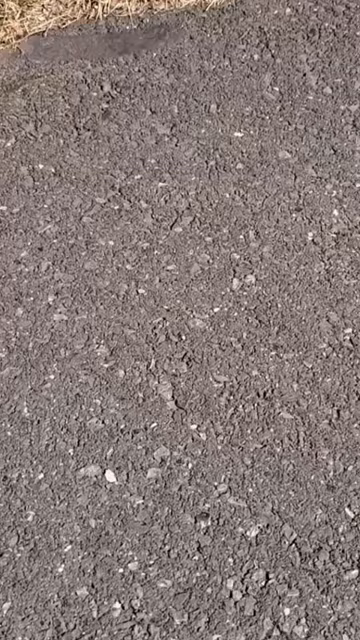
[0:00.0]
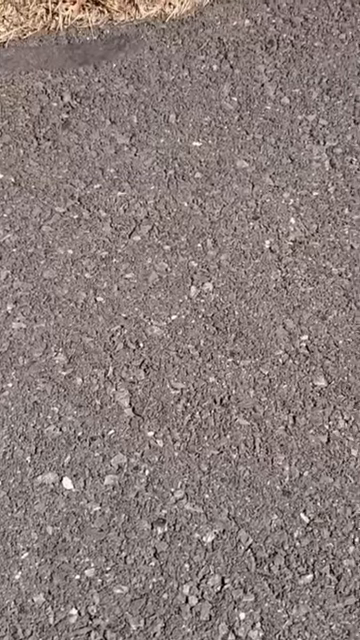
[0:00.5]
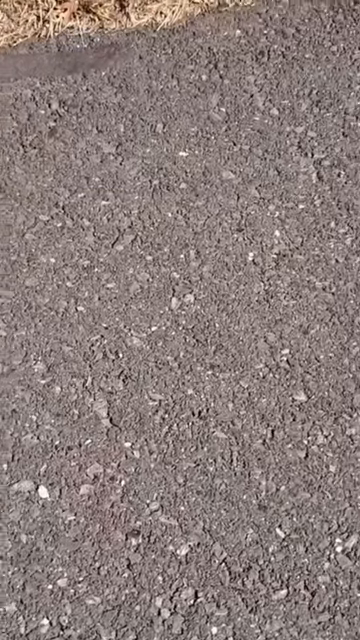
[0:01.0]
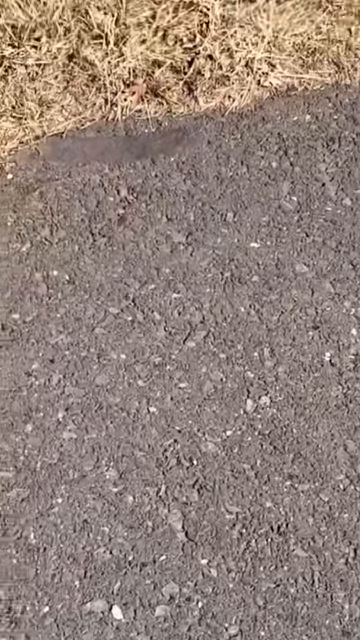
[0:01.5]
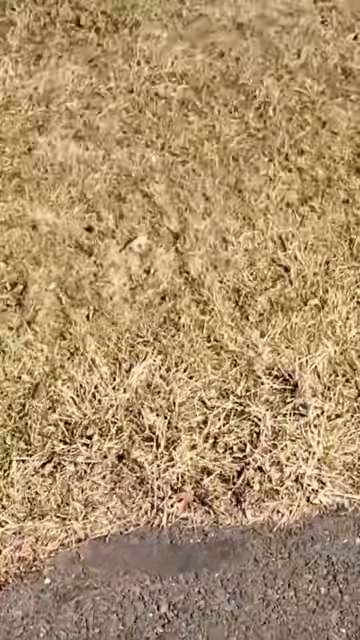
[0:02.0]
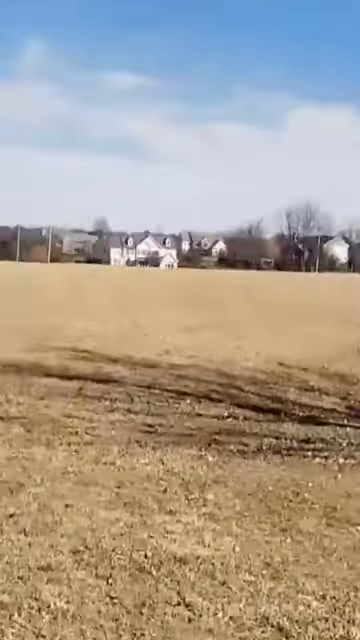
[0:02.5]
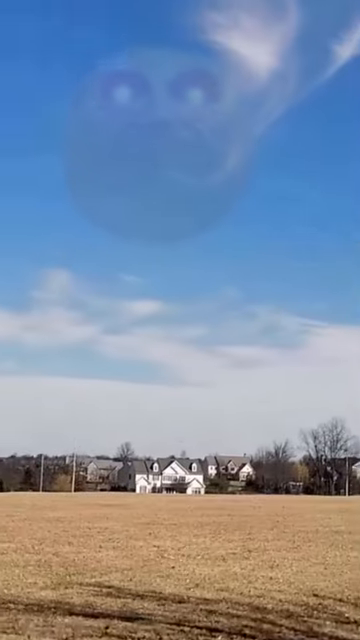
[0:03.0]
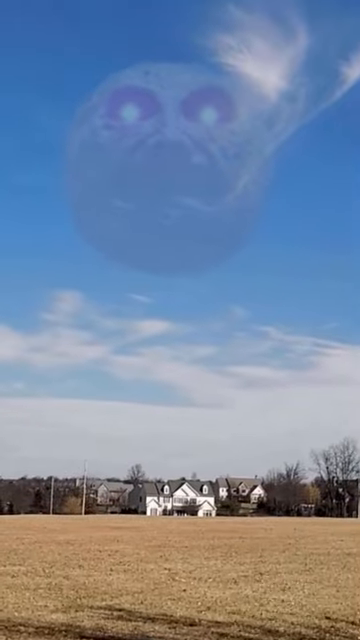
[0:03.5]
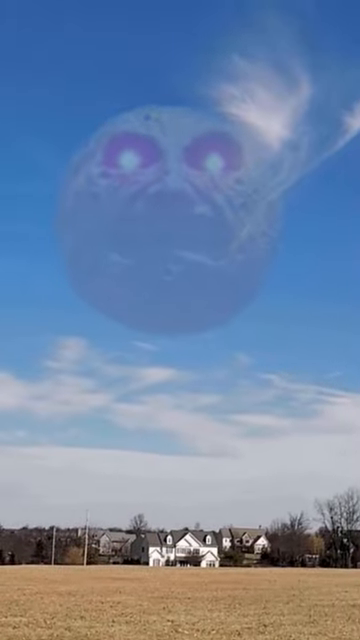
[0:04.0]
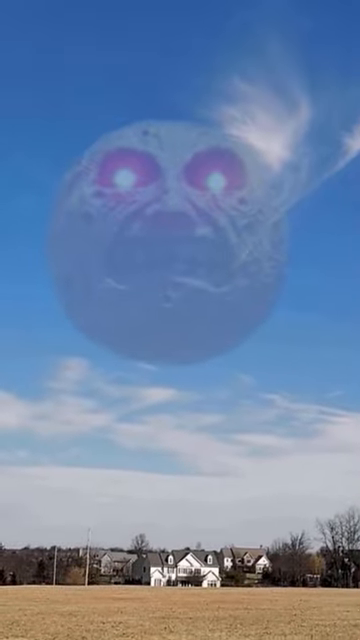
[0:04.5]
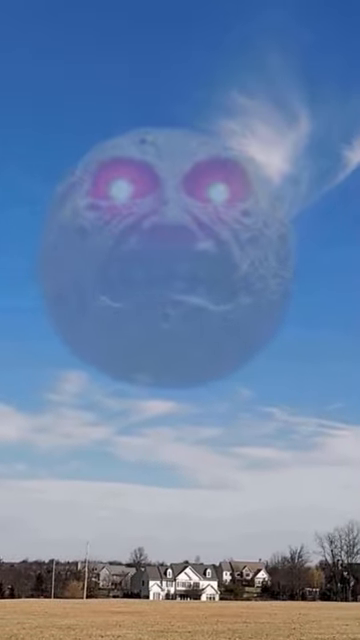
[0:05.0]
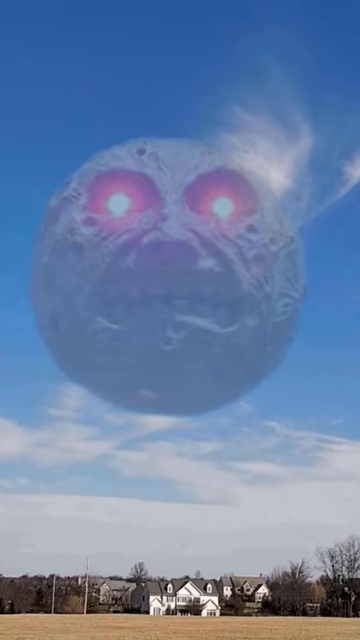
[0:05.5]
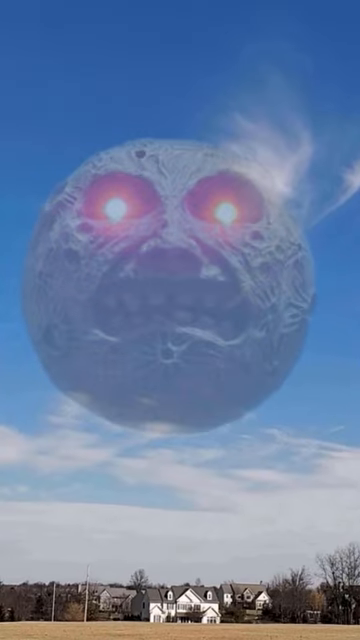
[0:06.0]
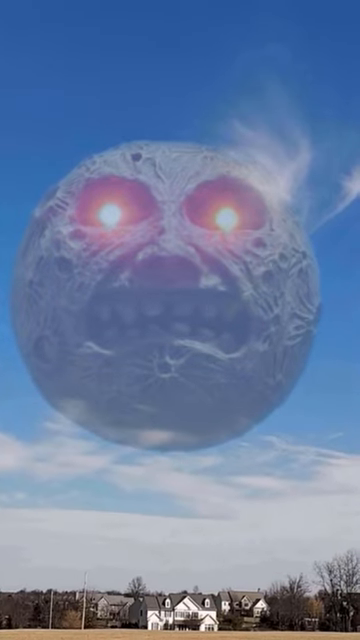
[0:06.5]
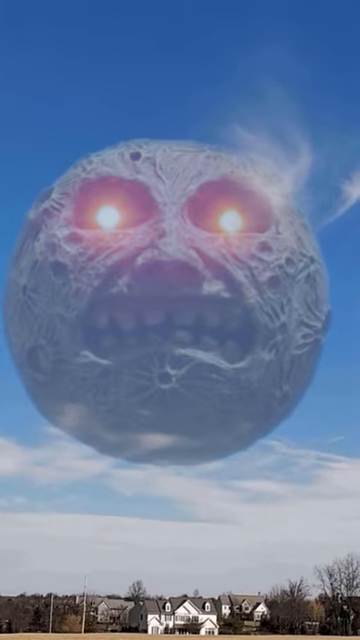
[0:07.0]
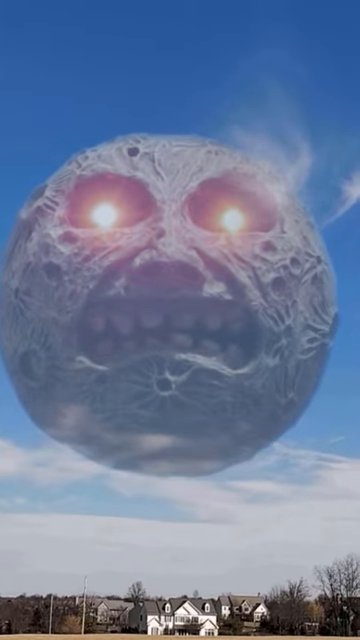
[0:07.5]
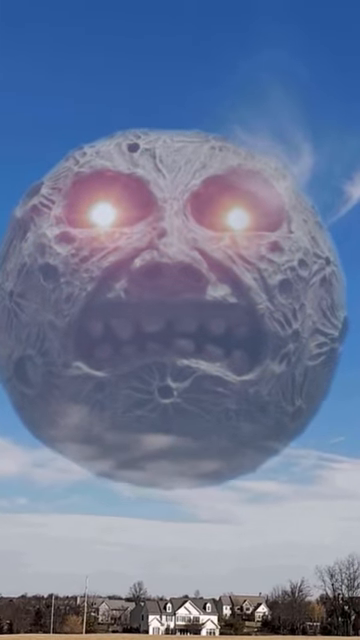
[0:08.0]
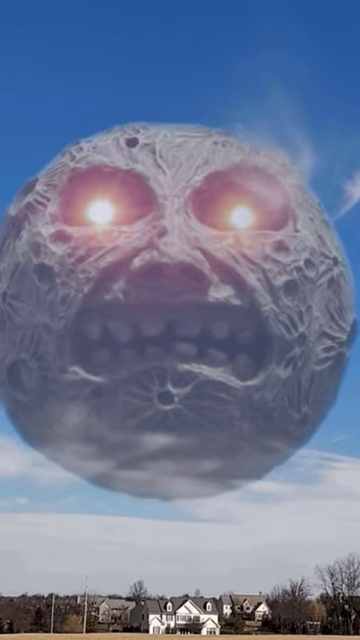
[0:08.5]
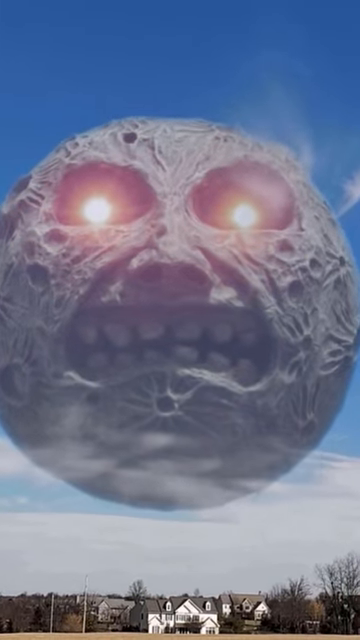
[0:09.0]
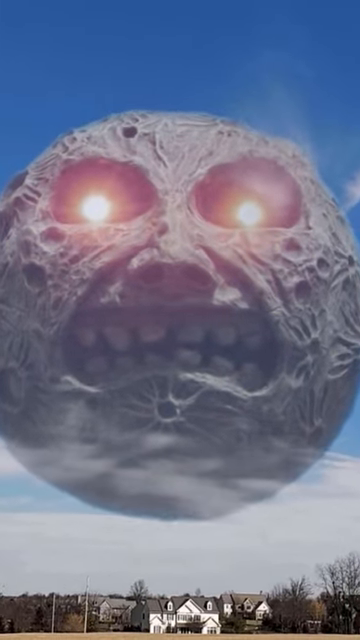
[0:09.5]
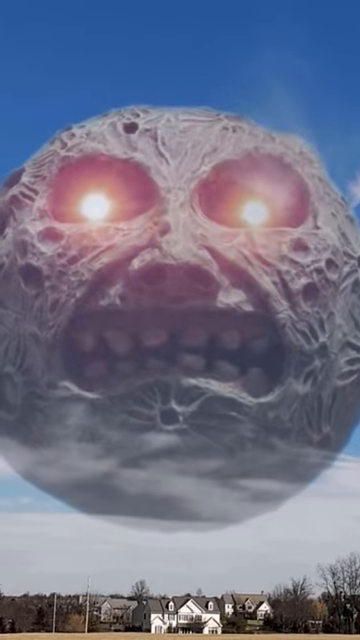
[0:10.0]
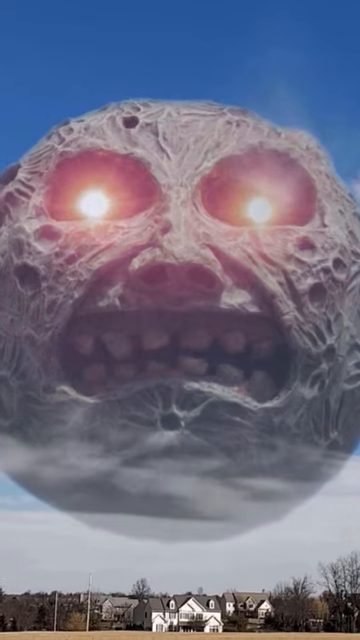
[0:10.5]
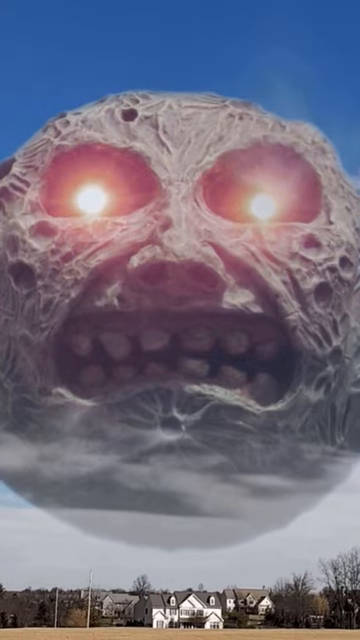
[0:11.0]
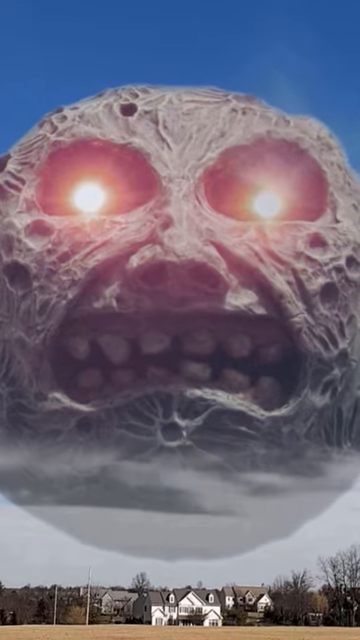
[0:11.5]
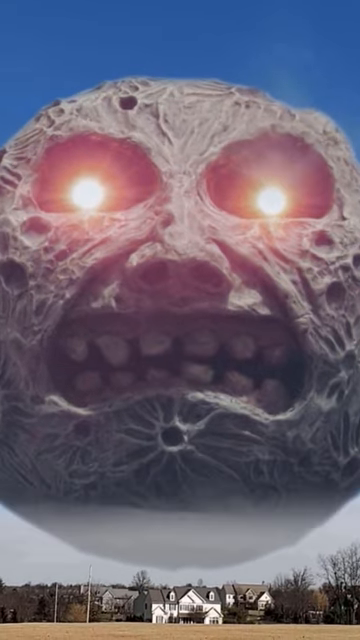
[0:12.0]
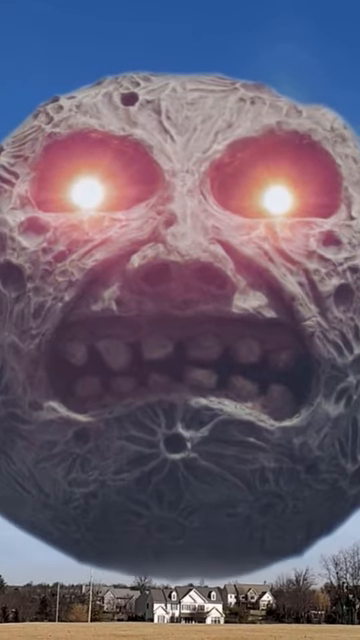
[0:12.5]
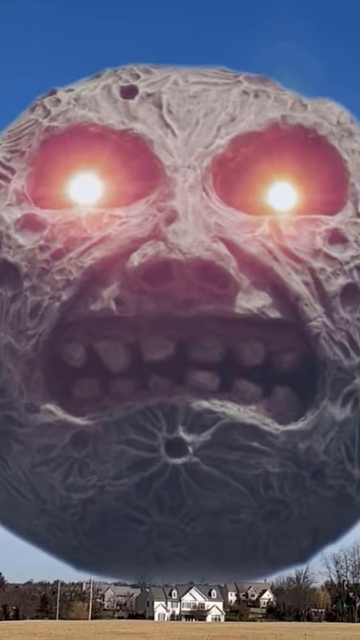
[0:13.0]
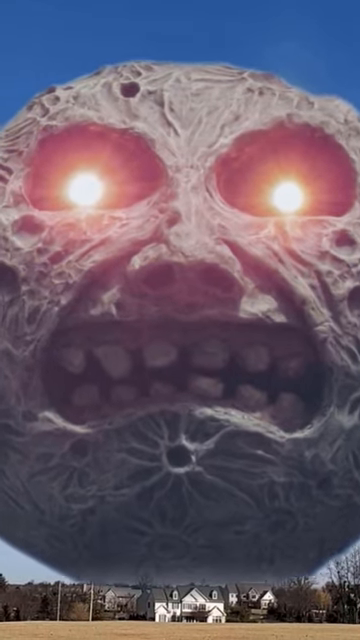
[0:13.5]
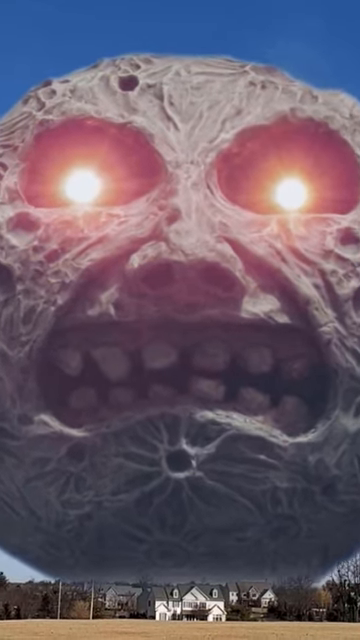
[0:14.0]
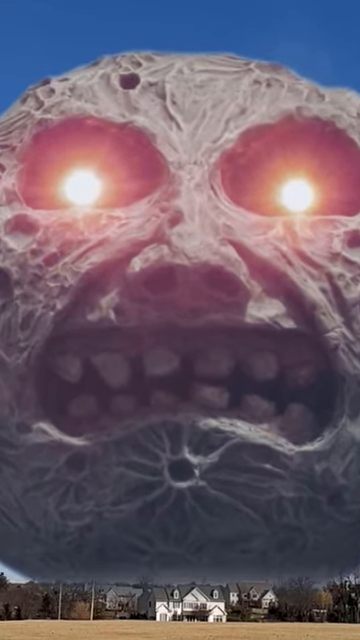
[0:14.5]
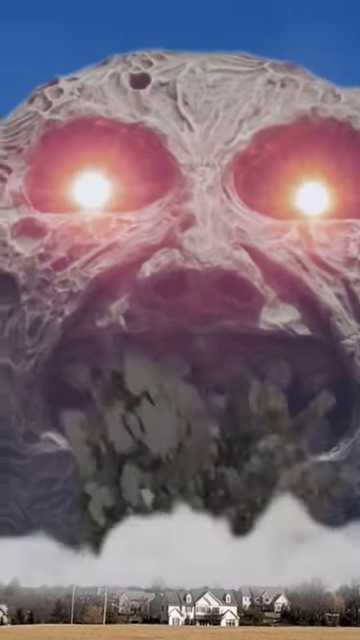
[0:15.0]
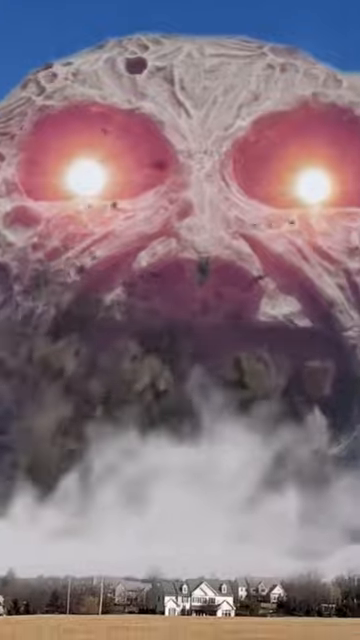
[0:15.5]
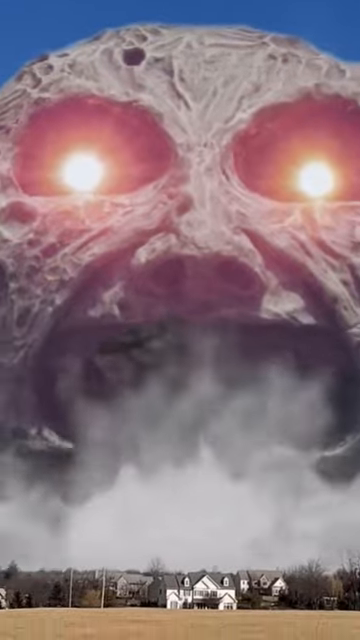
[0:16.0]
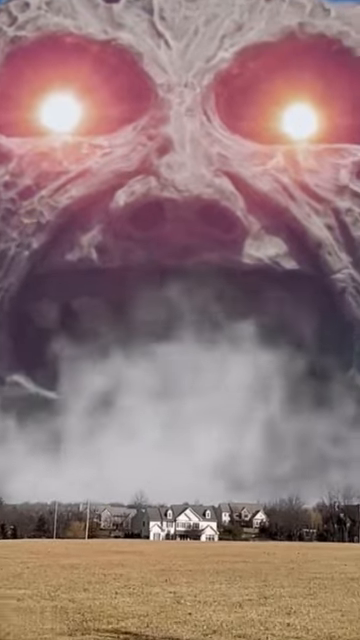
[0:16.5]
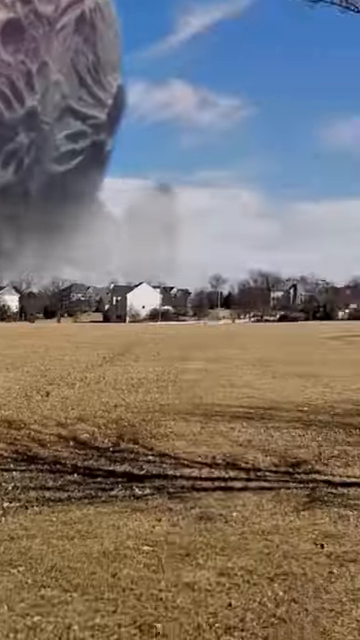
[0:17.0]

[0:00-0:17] First the ground is seen, a brown field, and then the view switches upward to the field and sky. Beyond the field, in the background, a white house sits amongst some trees that have no green leaves. Above is a blue sky with white clouds. Then a huge meteor appears. It has a face on it: a round ball shape with round red eyes with yellow centers, a nose, and an evil-looking mouth in a grimace, open with teeth showing. The meteor is gray and has holes in it in different parts of the face. It falls directly down to the earth through the sky, moving very slowly as it comes down. The meteor crashes right behind the house, creating a lot of smoke and debris. It is huge, and smoke comes up from the ground and surrounds the bottom of the meteor as it crashes into the earth. Once it crashes down, it does major damage to the area behind the house. The house is still standing after the crash.